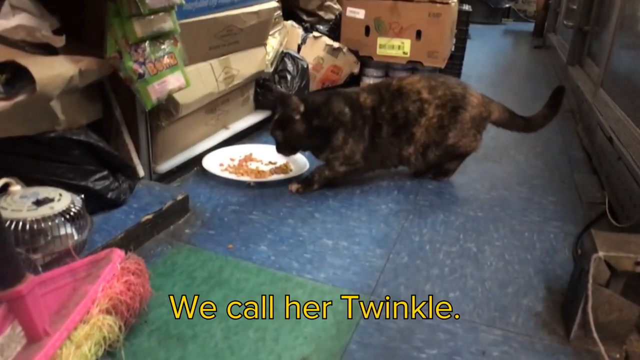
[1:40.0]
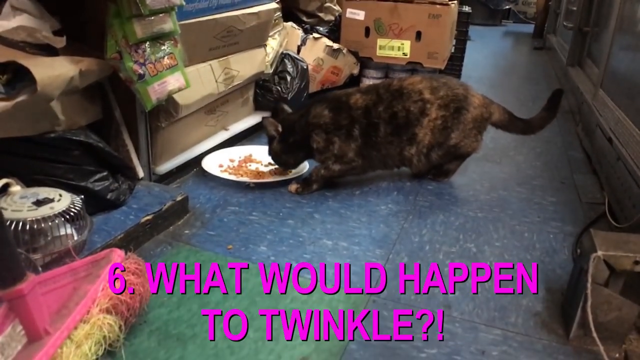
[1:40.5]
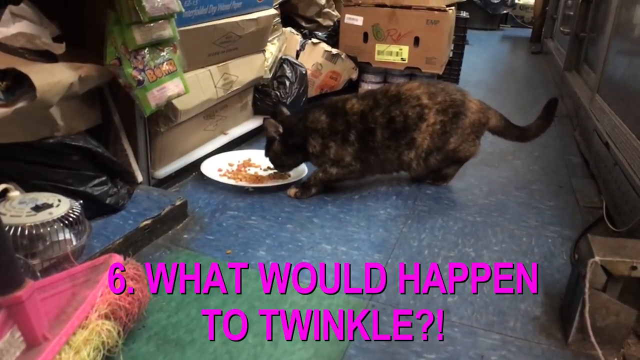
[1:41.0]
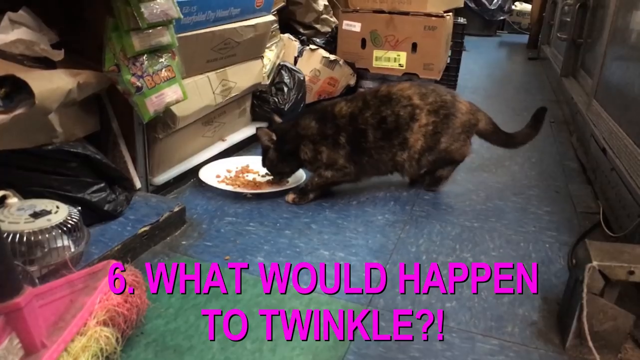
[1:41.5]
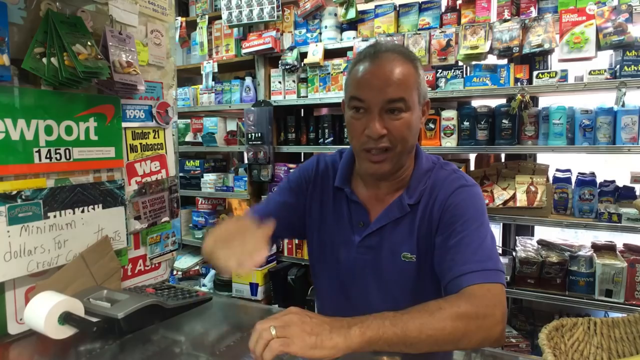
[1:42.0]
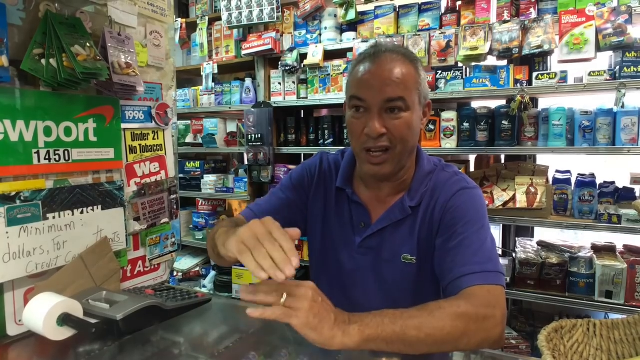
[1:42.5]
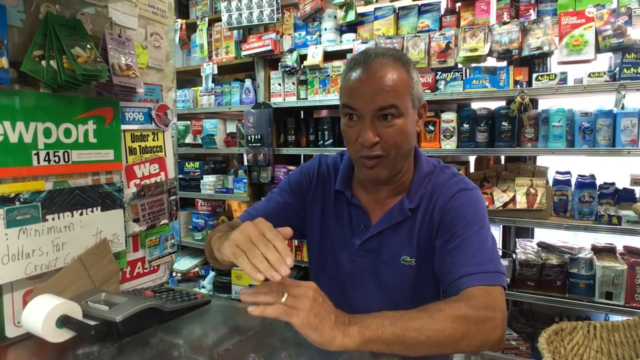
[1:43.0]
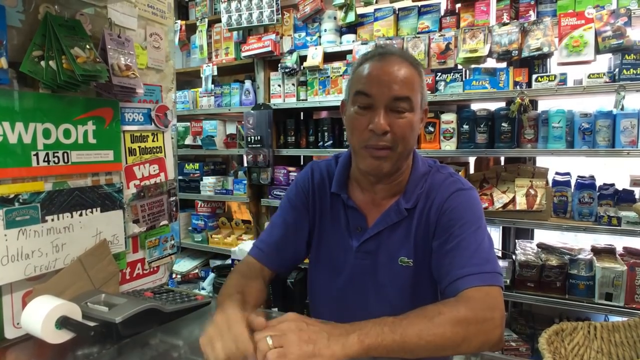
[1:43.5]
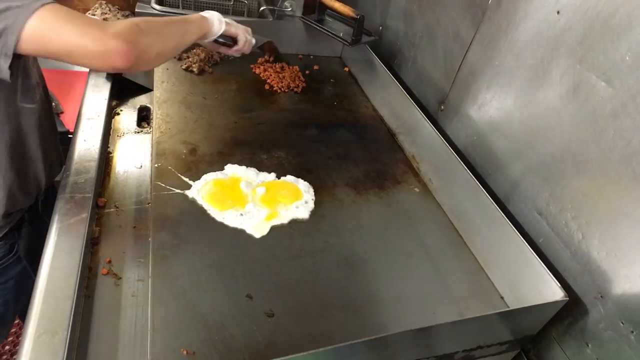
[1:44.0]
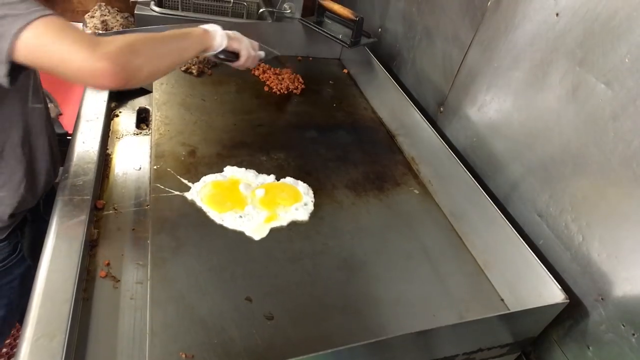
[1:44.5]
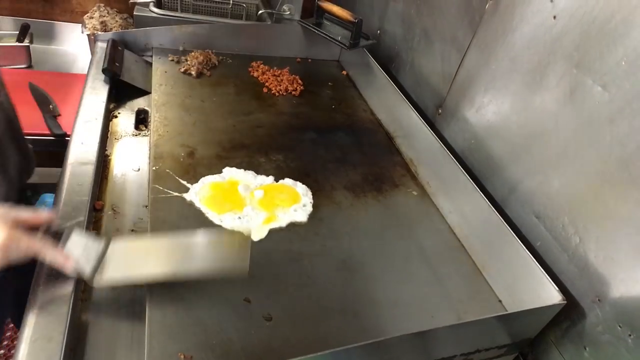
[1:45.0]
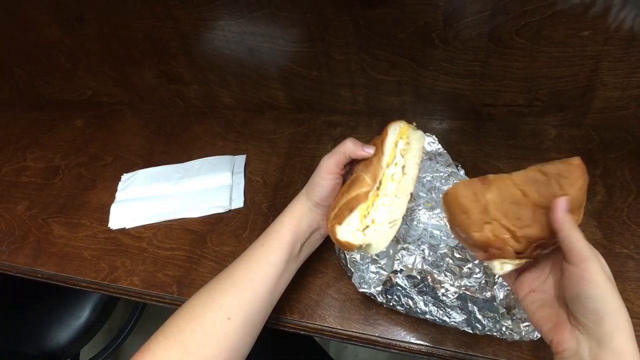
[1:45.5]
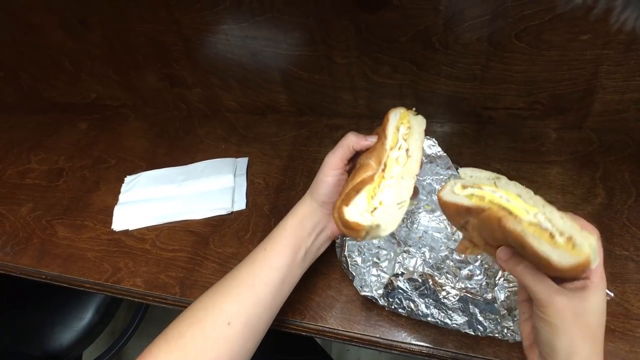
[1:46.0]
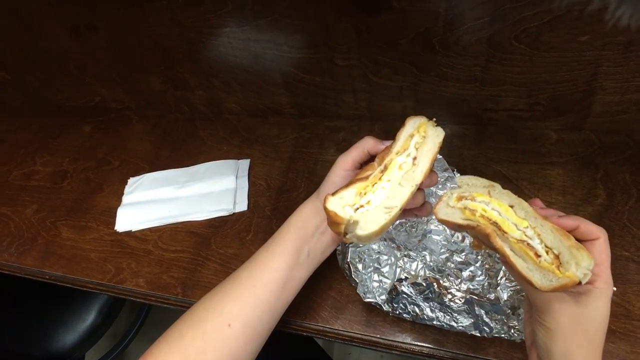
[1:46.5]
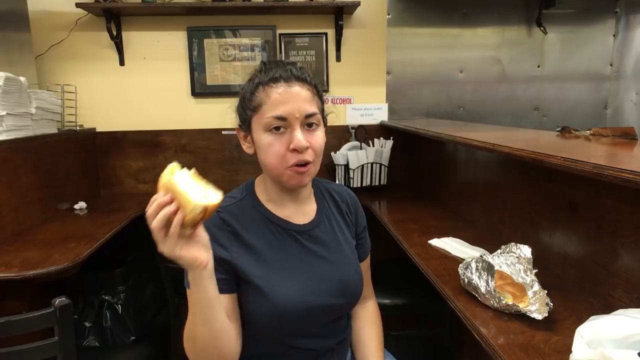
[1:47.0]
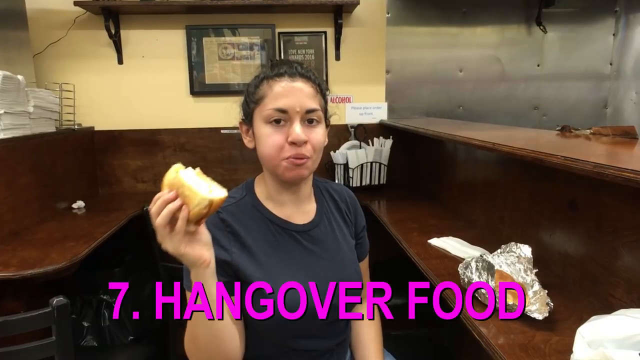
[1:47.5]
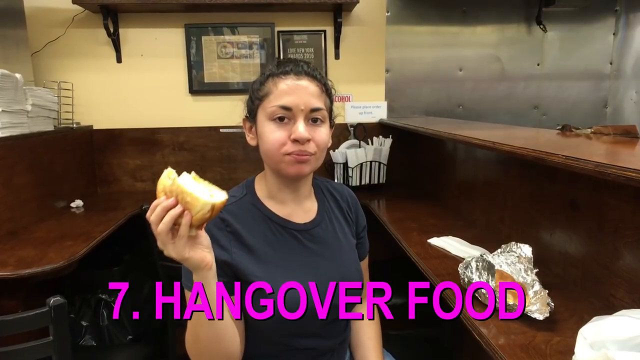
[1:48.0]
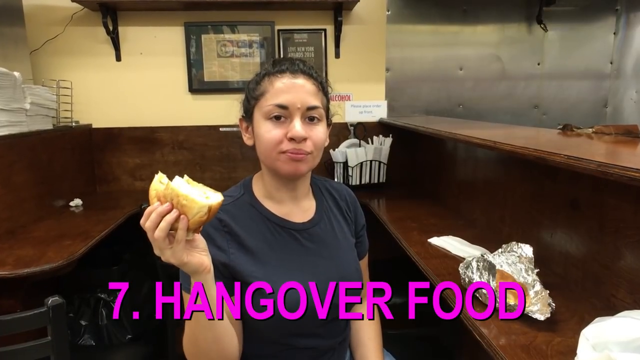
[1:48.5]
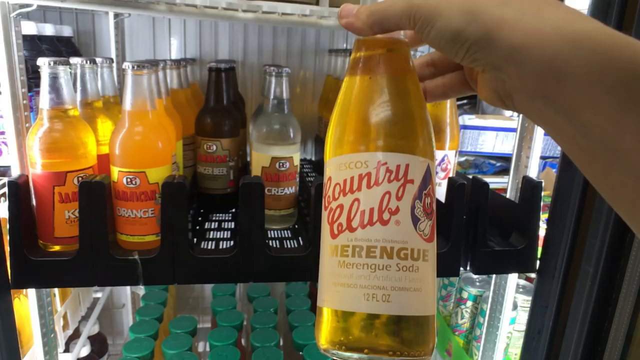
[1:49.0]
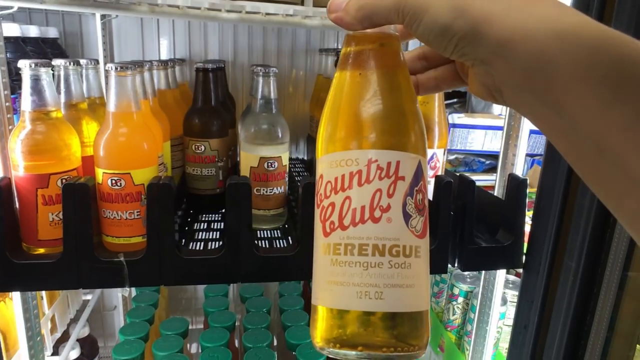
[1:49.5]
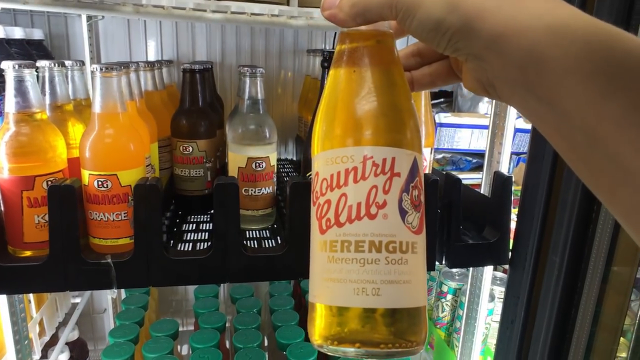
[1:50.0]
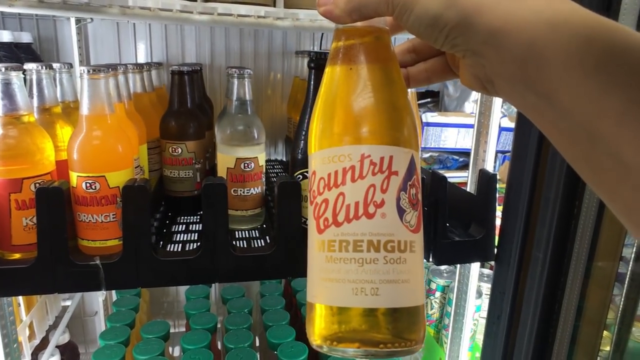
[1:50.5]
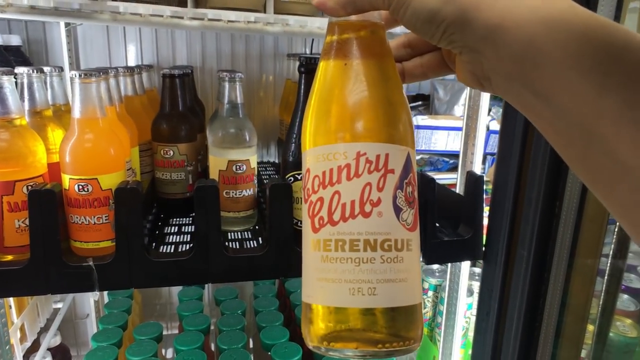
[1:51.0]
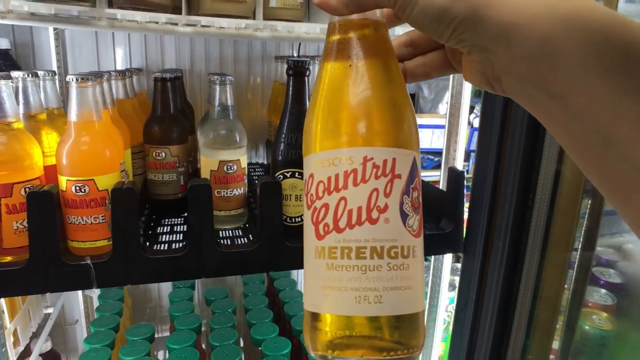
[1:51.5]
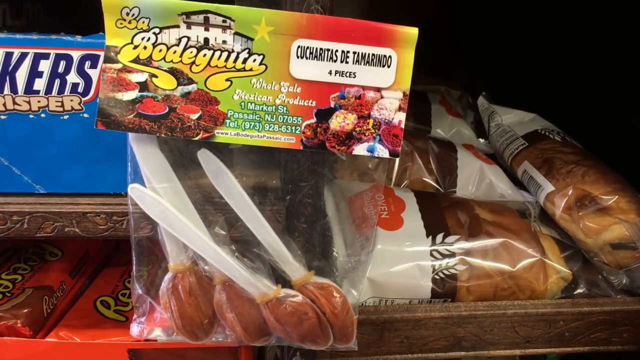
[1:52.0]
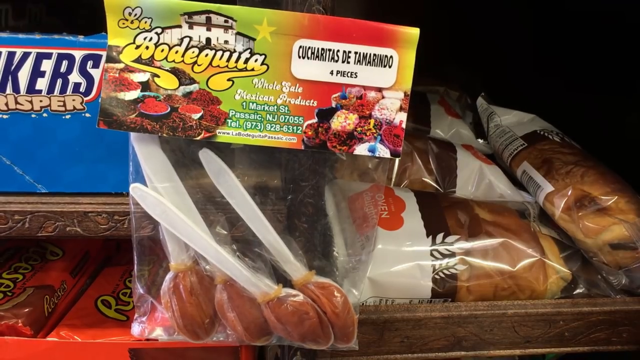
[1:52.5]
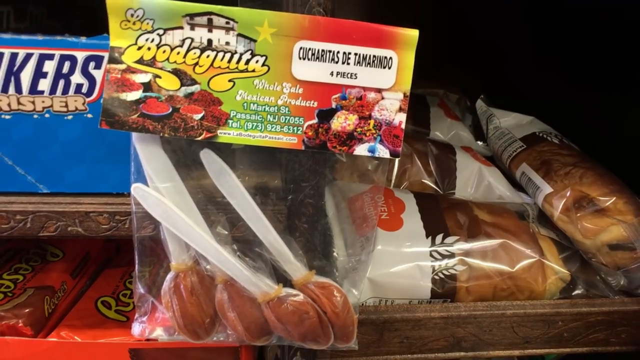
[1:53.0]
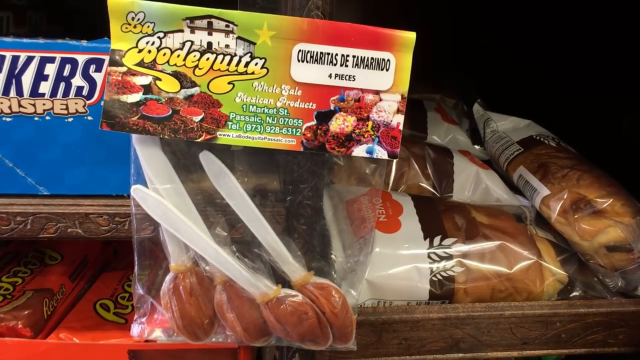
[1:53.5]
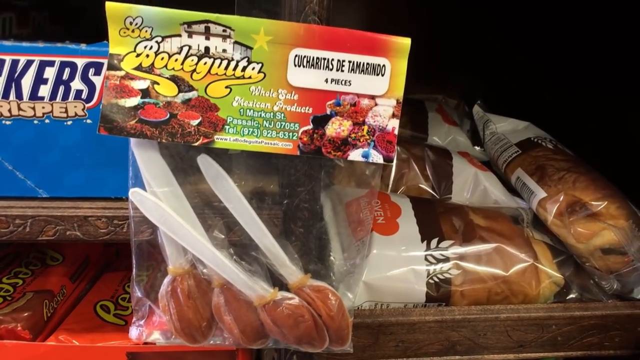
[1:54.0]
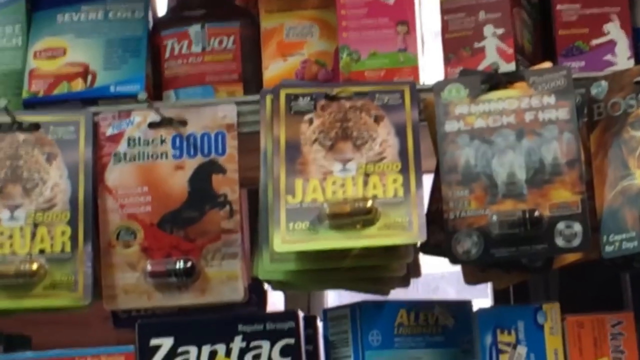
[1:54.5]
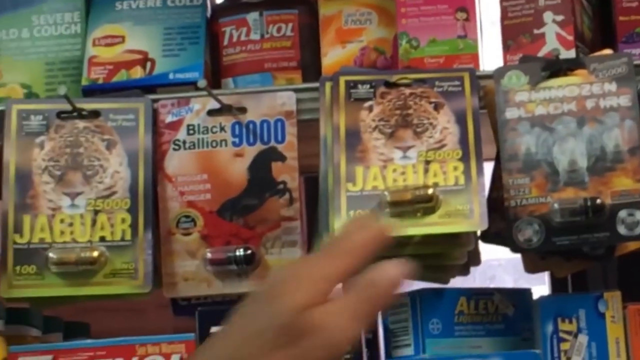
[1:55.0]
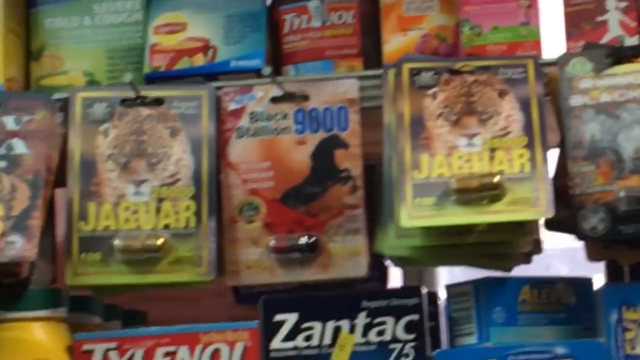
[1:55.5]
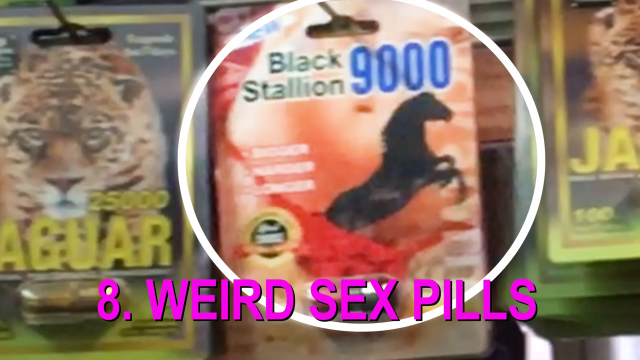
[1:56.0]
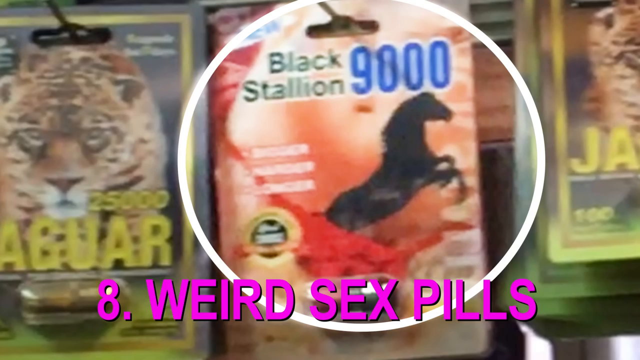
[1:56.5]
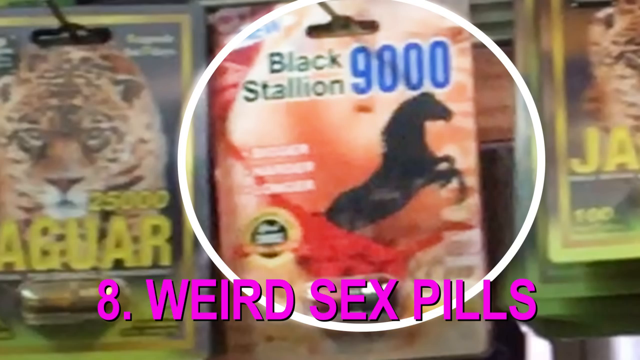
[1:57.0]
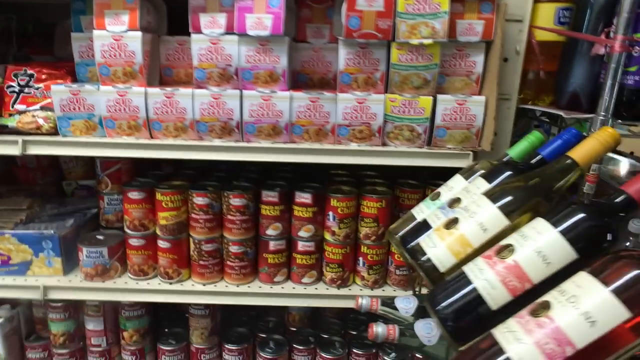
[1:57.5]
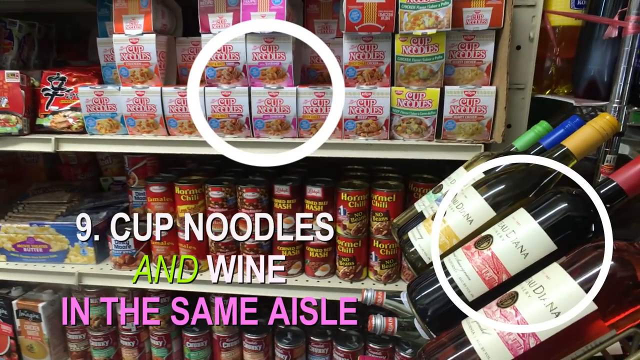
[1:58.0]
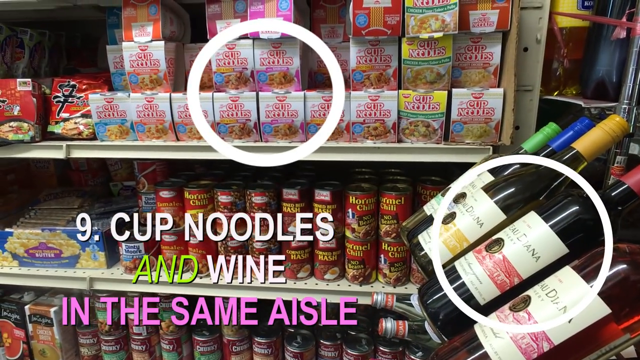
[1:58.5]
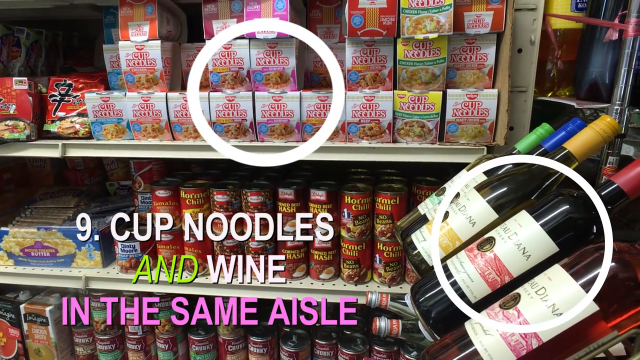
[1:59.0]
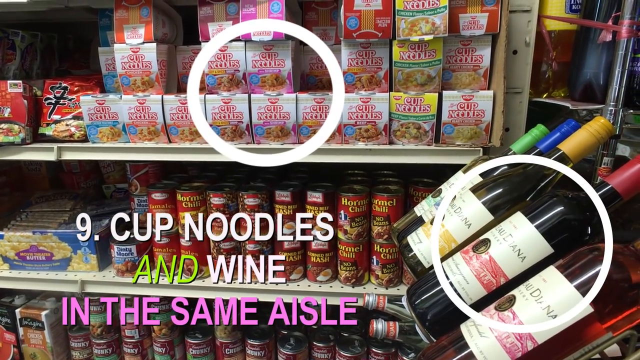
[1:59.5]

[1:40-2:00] A man and a woman are buying at a store. A cat eats from a plate, and "we call her Twinkle" appears in the middle, with boxes next to the cat. Text in purple reads "6" and "what will happen to Twinkle?". The scene shifts to a man in a blue collared t-shirt talking. Eggs are fried, followed by mince, and then a hot bun with hot filling inside is shown. A lady in a dark blue t-shirt is eating in the middle of the frame, and text reads "7" and "hangover food"; she seems like she might be a PA where she is sitting. A Country Club drink appears behind her, followed by orange. Something with white sticks in it, like plastic, appears, and then Black Stallion 9000, followed by "8" and "weird sex pills" in purple capital letters.